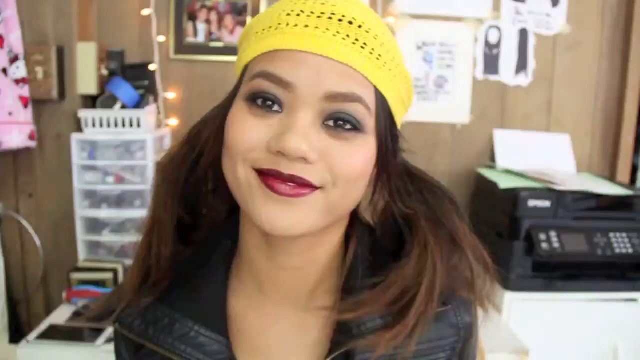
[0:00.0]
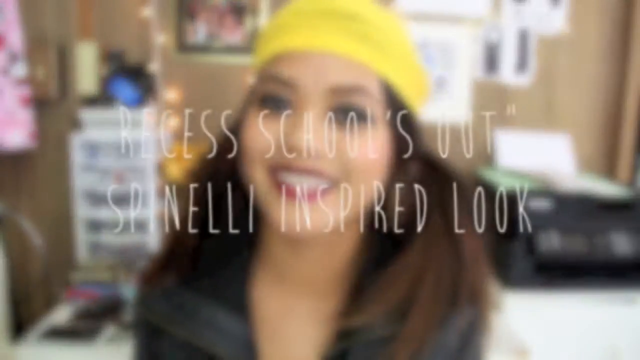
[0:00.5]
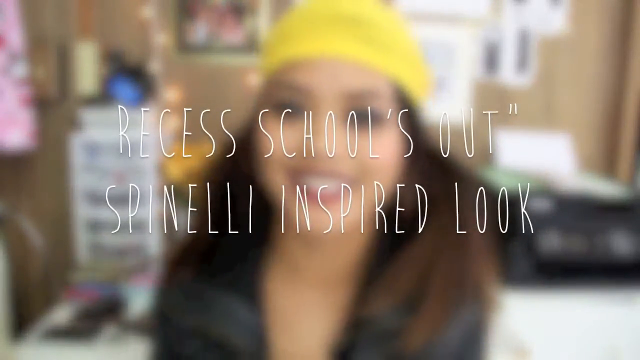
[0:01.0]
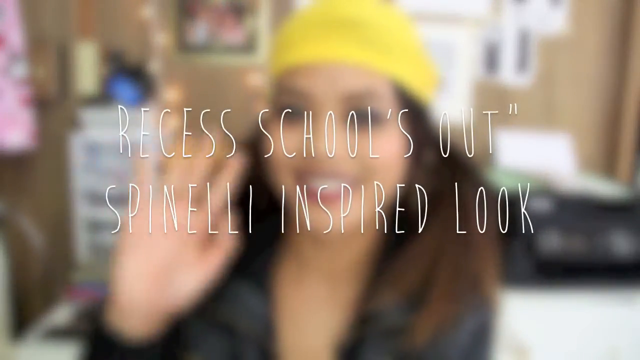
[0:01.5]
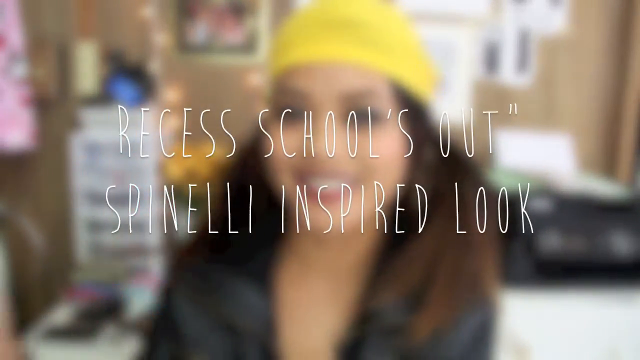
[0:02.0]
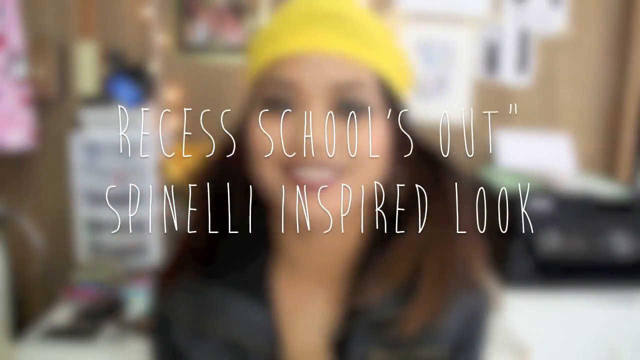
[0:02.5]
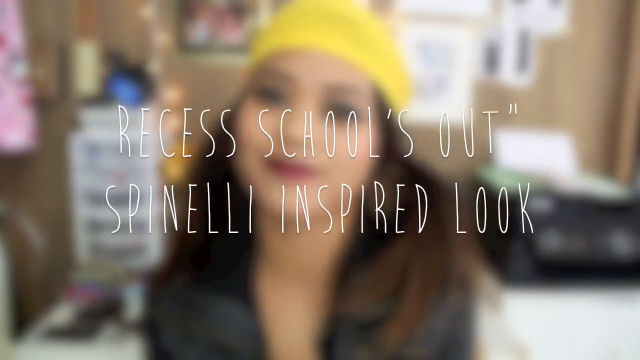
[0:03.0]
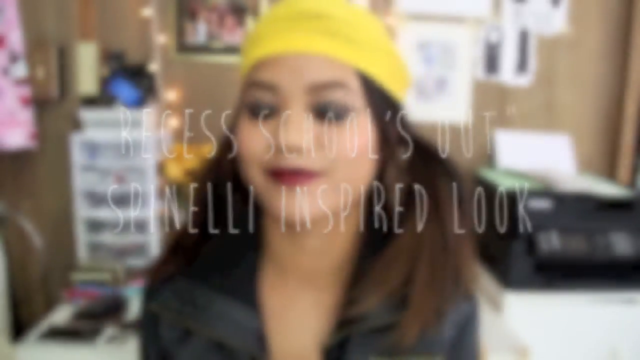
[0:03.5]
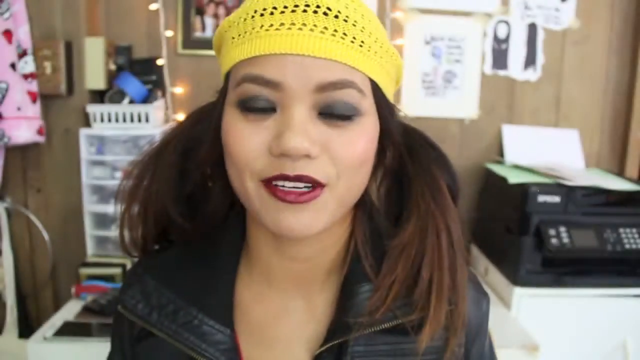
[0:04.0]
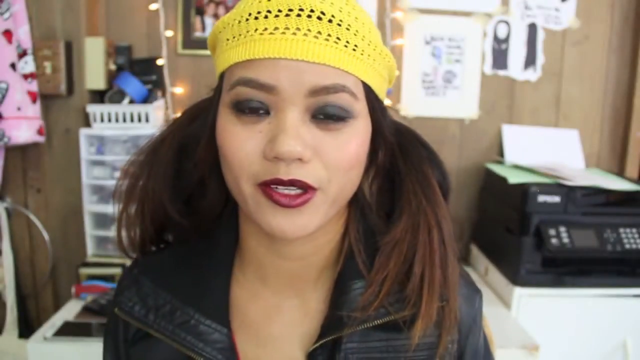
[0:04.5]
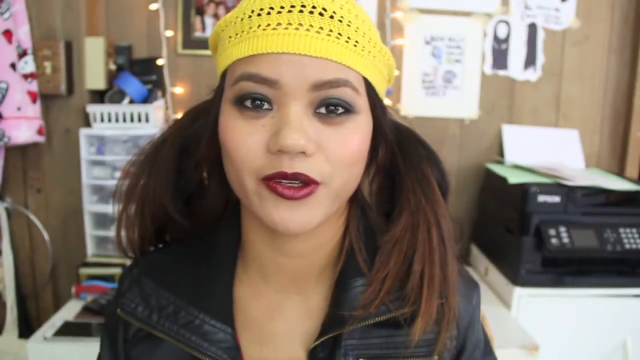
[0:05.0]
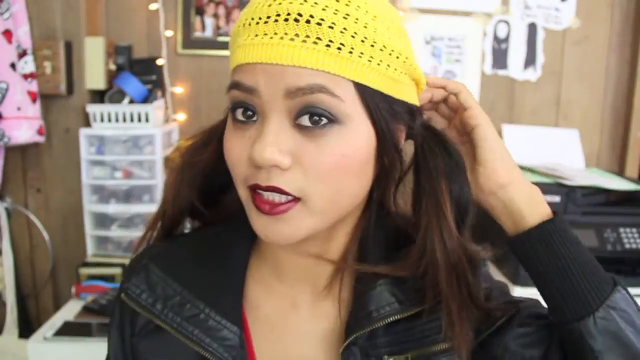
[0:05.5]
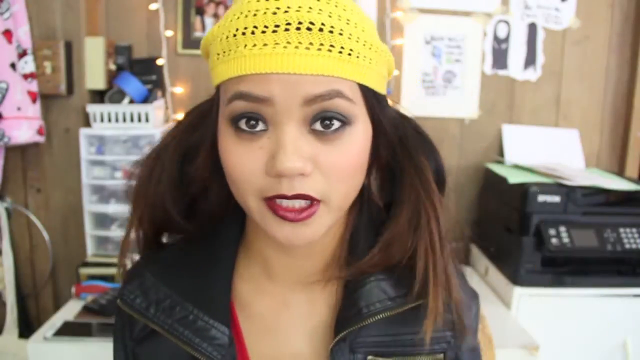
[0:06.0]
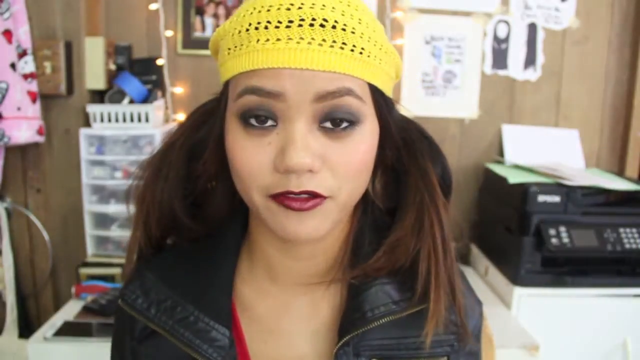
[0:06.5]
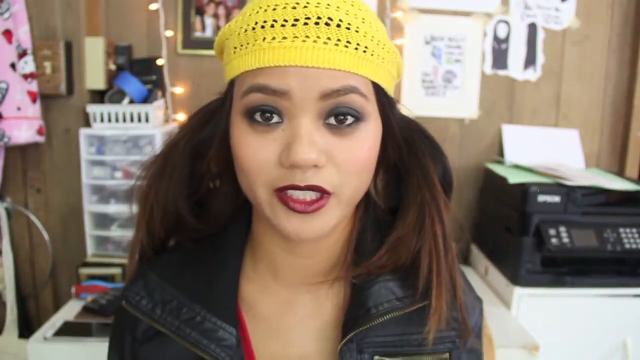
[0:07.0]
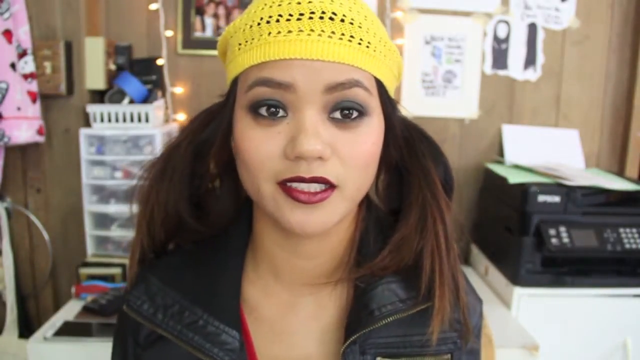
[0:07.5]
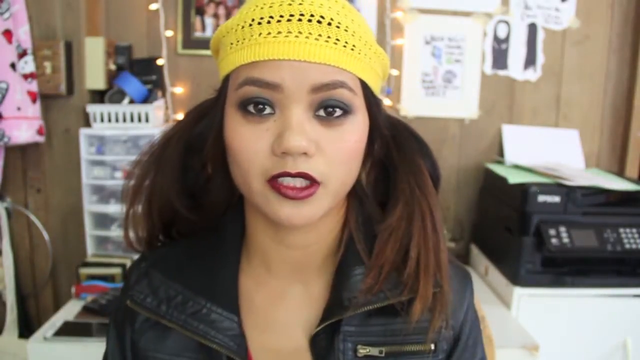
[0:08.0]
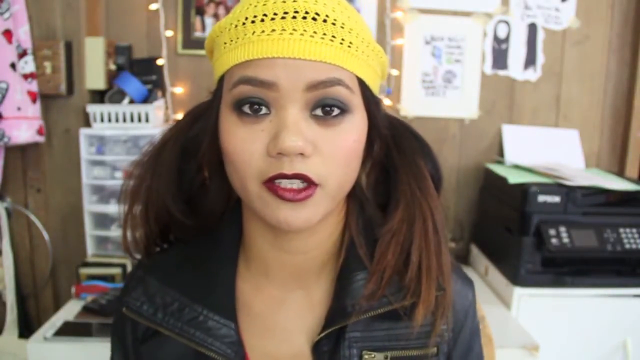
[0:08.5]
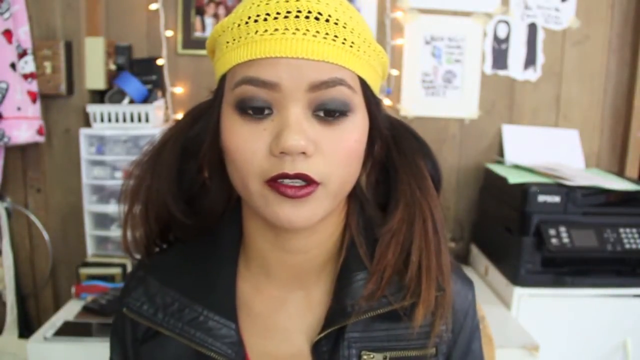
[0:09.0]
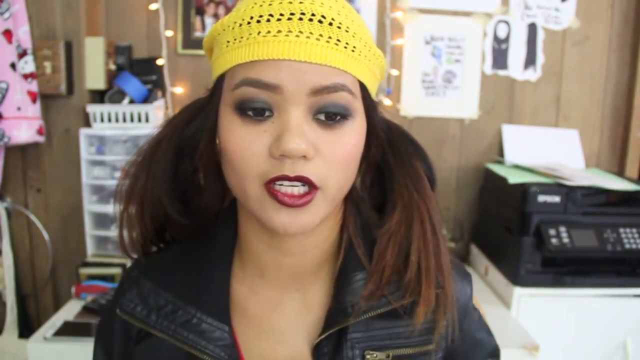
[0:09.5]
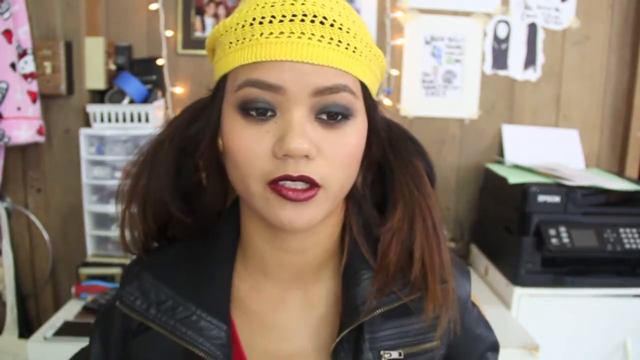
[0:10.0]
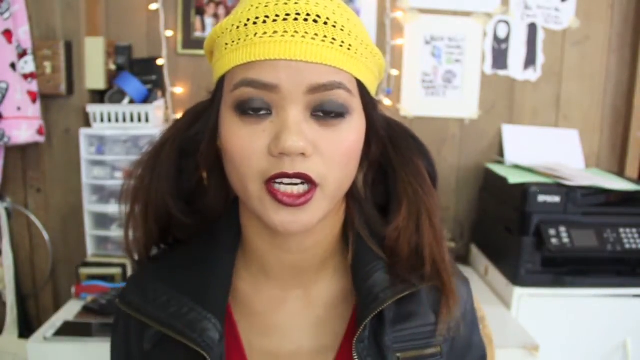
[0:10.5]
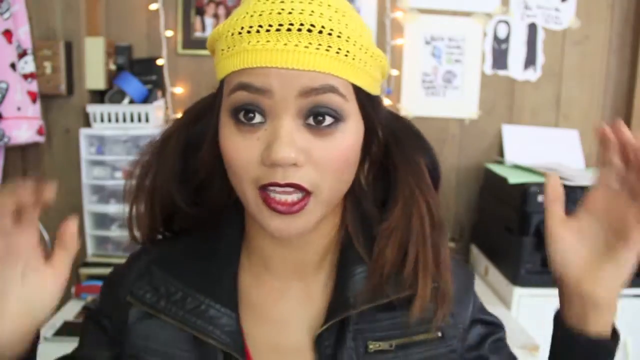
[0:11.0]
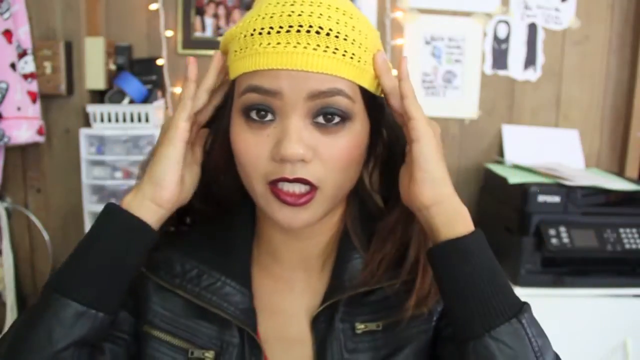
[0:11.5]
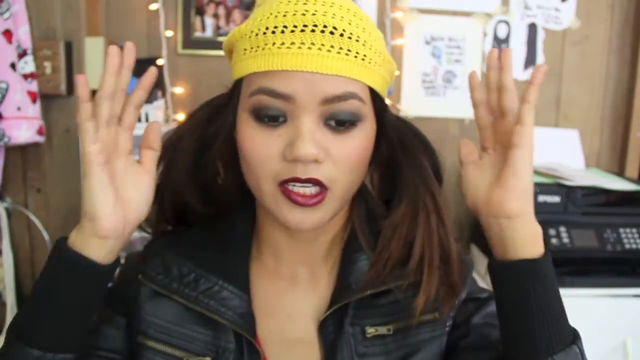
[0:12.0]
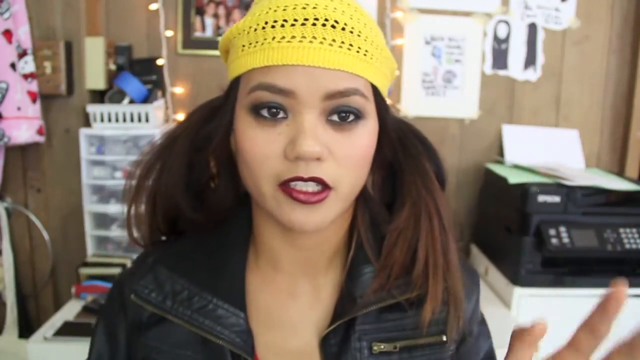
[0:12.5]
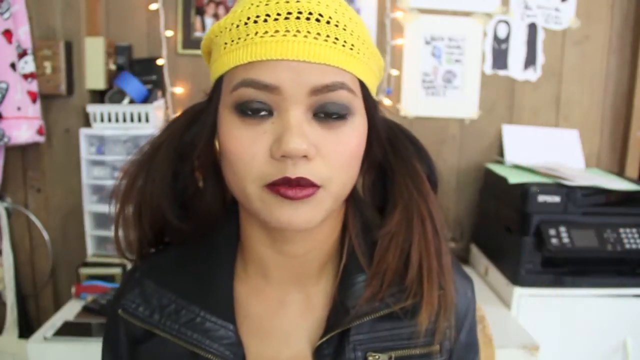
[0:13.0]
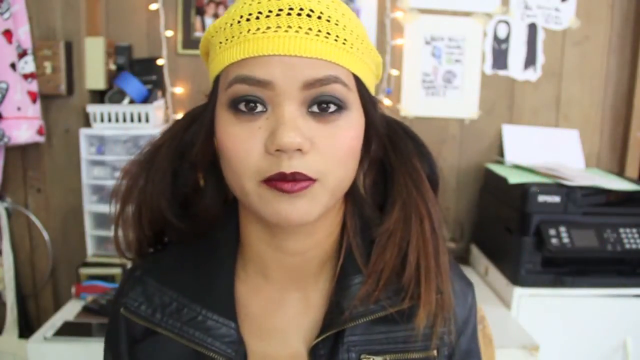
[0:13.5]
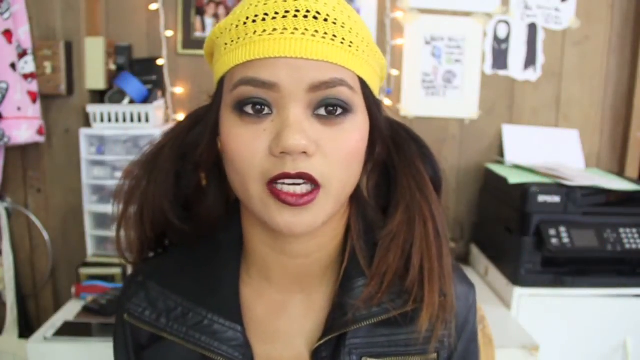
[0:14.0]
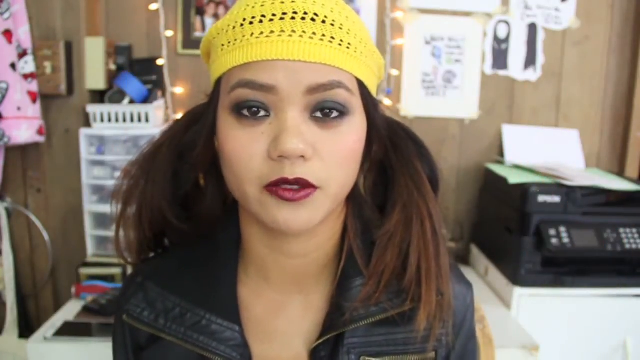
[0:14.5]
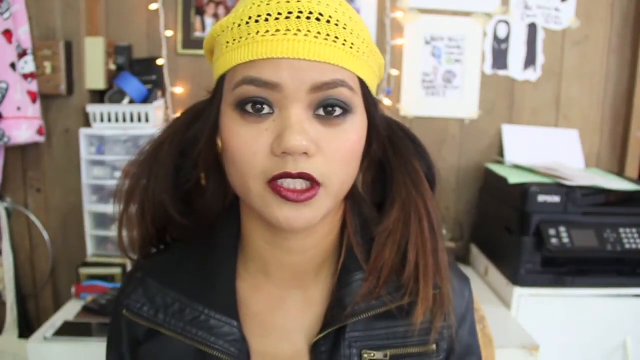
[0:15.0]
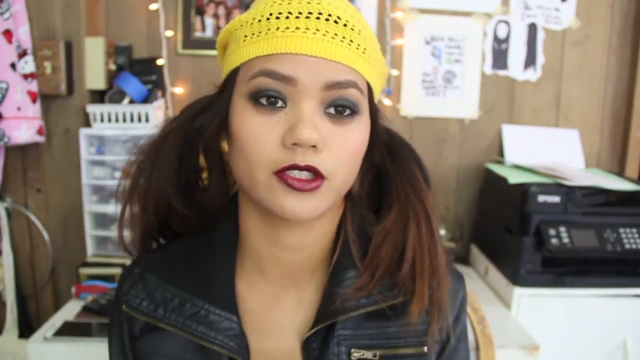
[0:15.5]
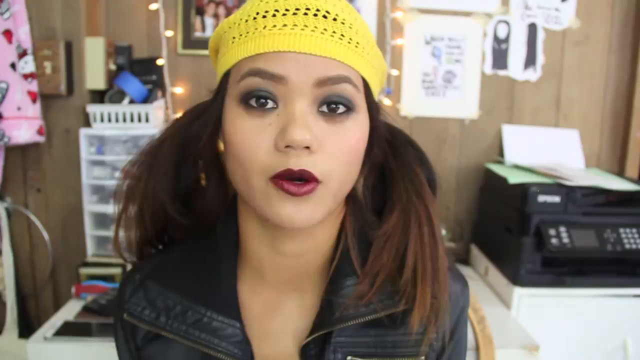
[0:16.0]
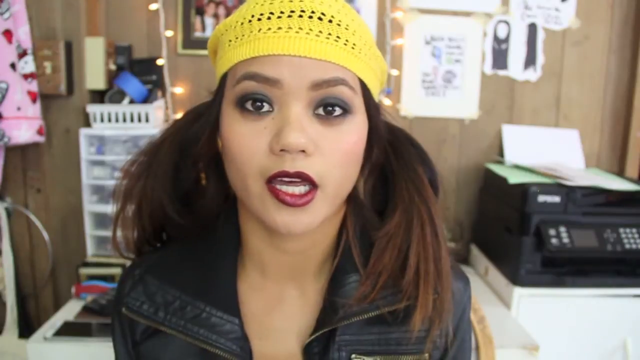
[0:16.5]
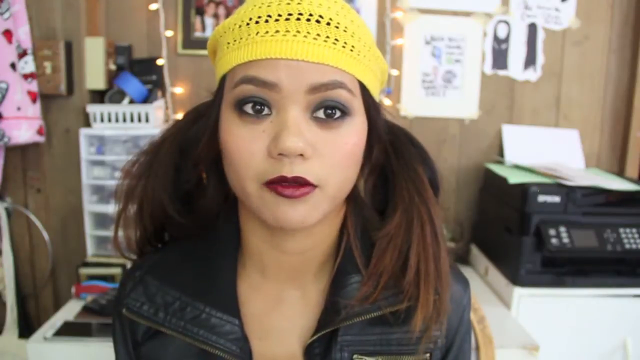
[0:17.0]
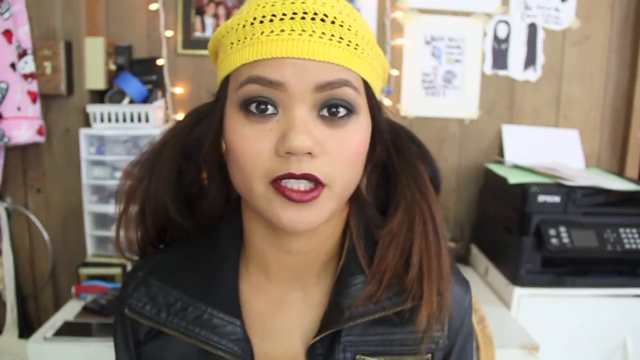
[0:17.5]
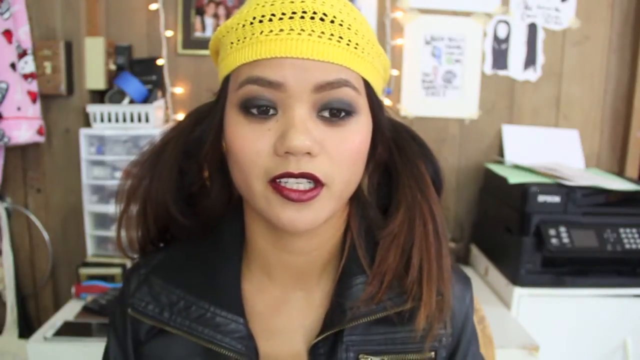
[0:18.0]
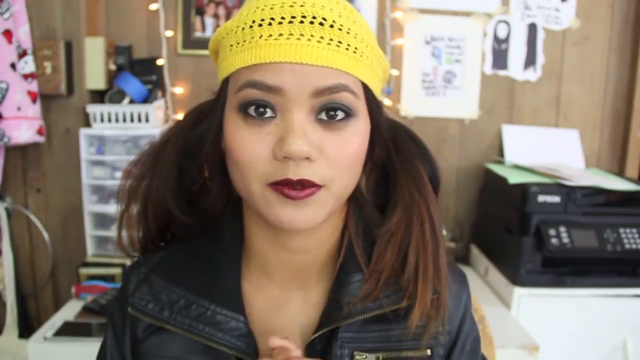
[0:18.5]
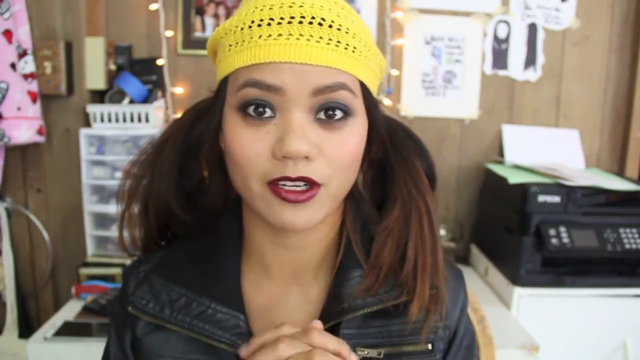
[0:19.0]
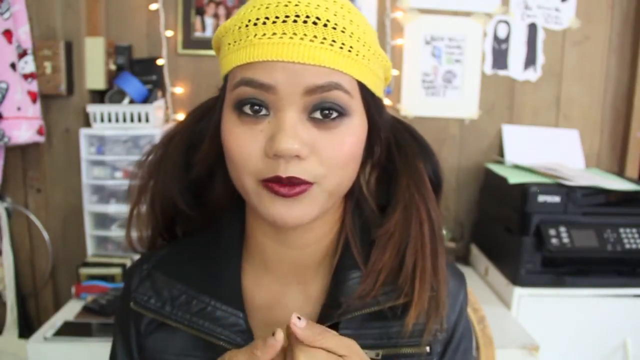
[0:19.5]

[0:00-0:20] A smiling woman wears a yellow hat or a yellow hoodie. She has red lipstick on, her eyeshadow and eyelashes are done, and she has long brown hair styled in two ponytails. She is sitting indoors, with a type of printing machine next to her. Text on screen reads "recess school out Spinelli inspired a look" and "this is who the look was inspired by." She is talking, maybe explaining her look. Her makeup is simple.